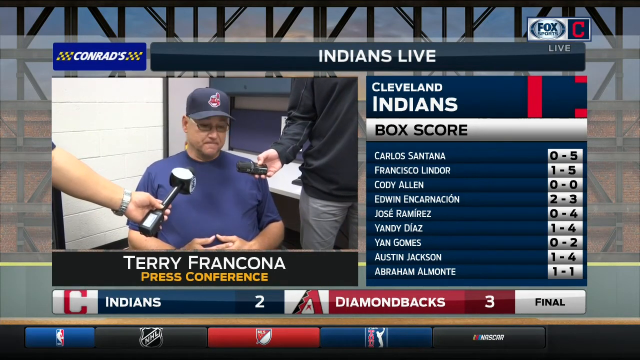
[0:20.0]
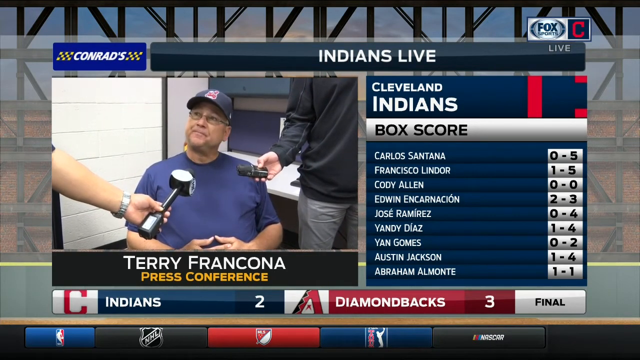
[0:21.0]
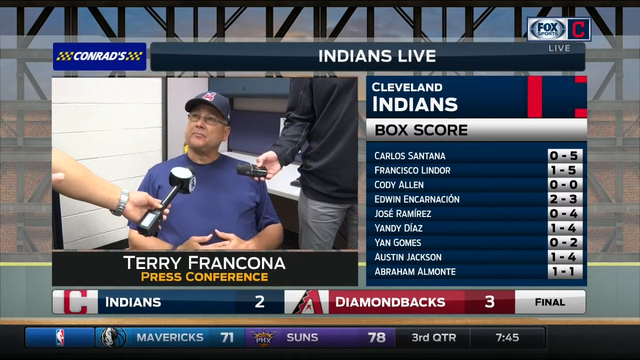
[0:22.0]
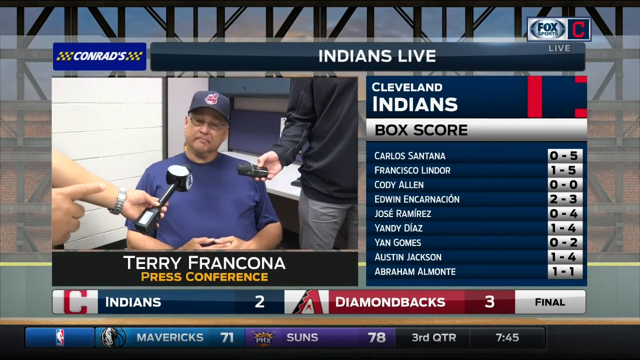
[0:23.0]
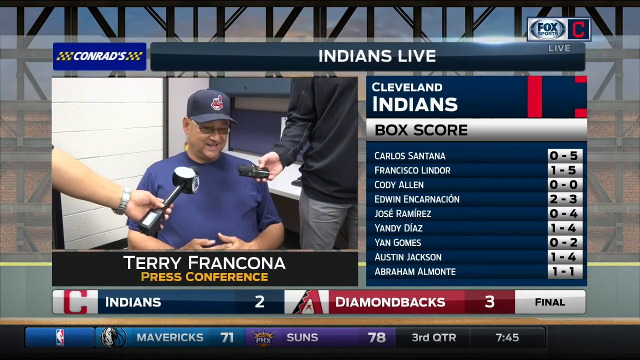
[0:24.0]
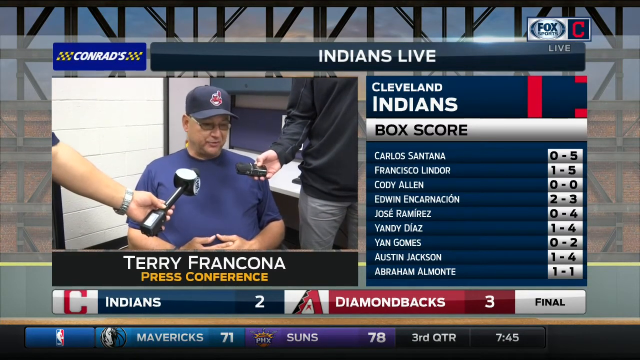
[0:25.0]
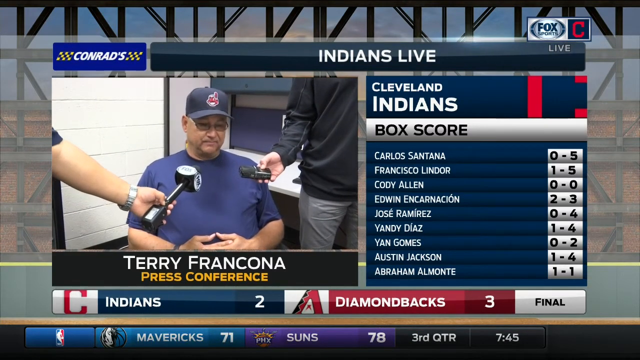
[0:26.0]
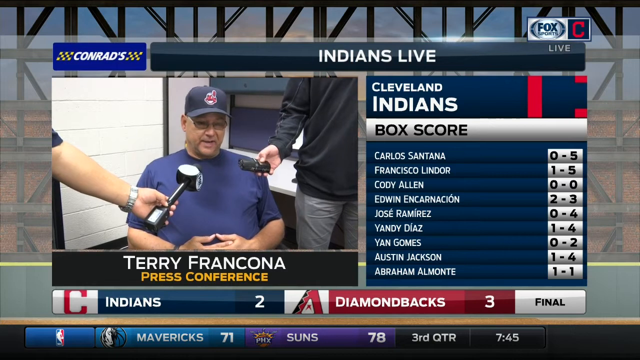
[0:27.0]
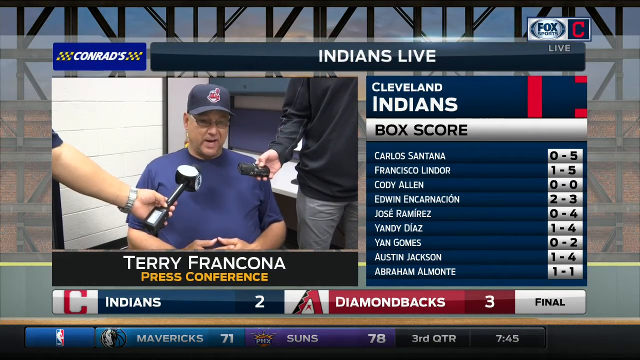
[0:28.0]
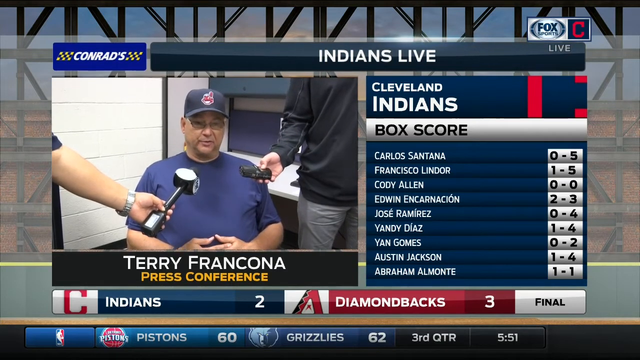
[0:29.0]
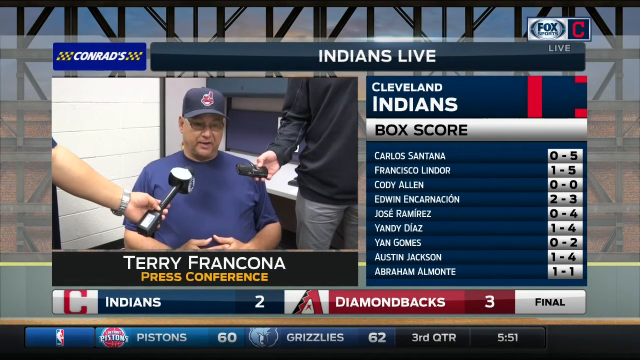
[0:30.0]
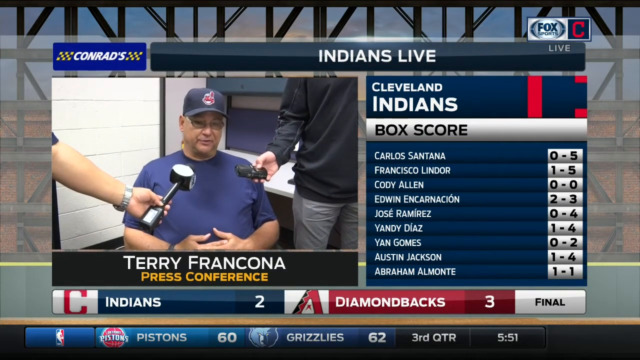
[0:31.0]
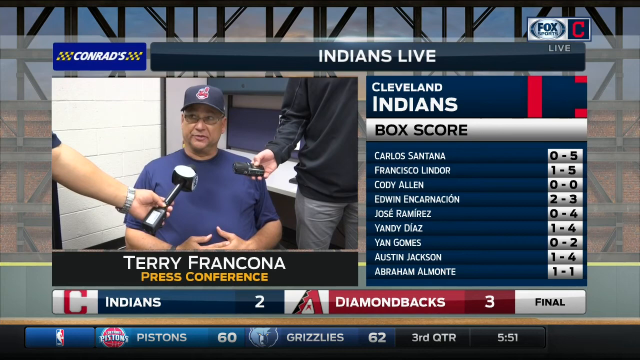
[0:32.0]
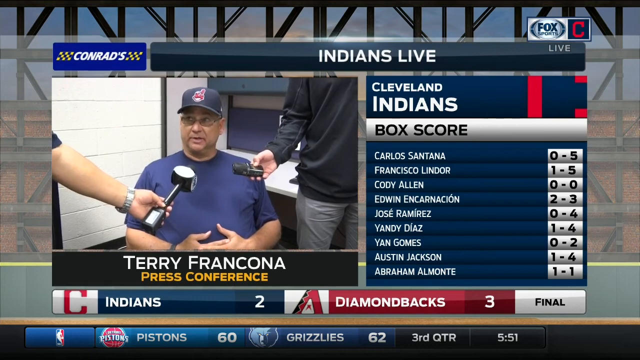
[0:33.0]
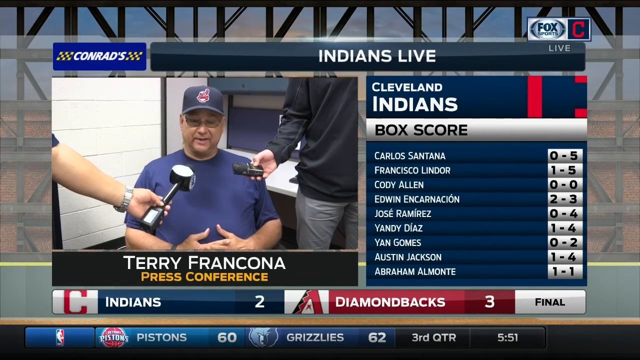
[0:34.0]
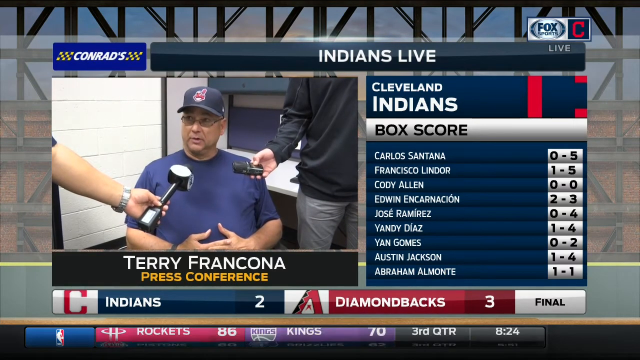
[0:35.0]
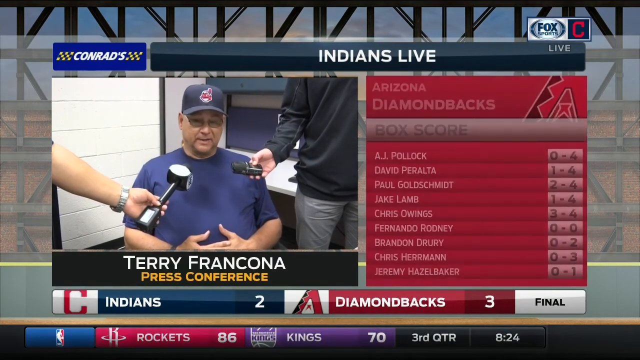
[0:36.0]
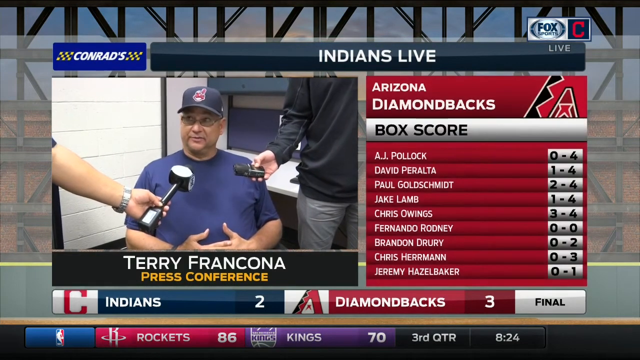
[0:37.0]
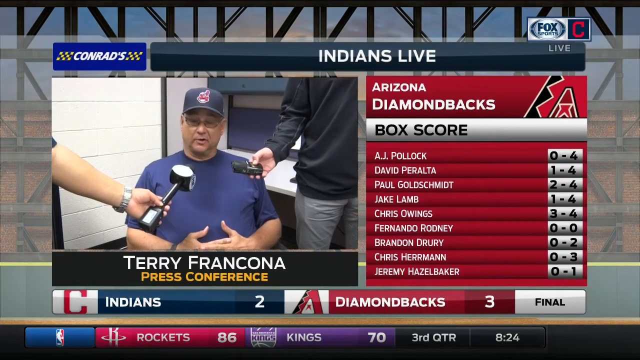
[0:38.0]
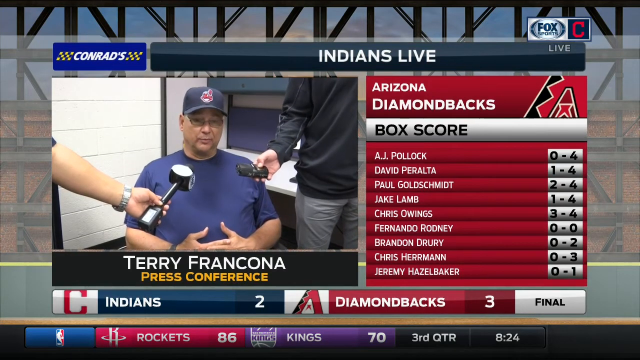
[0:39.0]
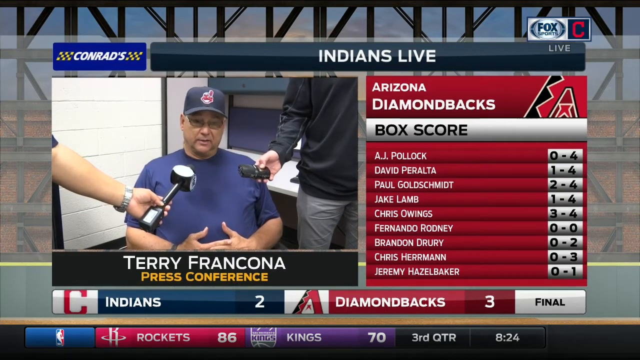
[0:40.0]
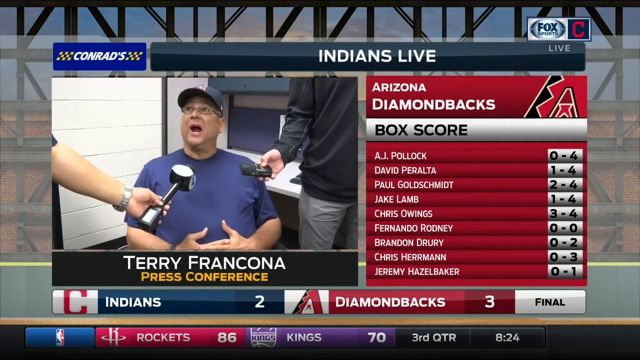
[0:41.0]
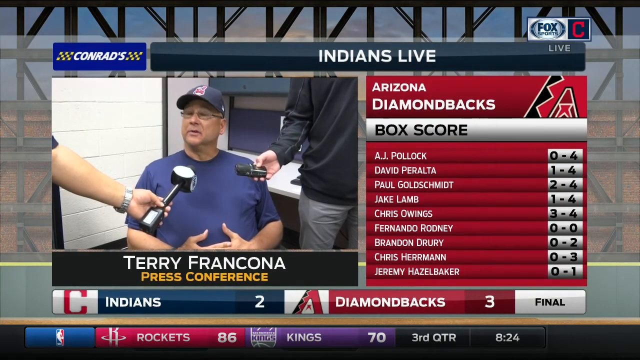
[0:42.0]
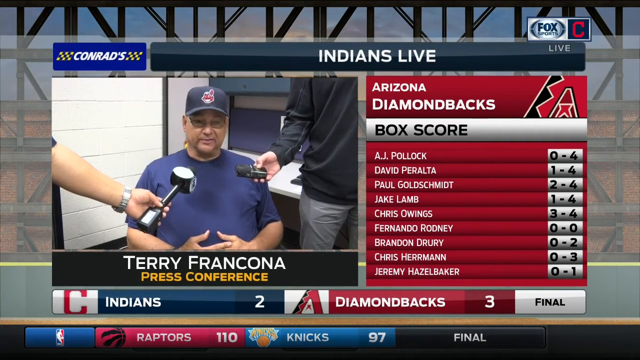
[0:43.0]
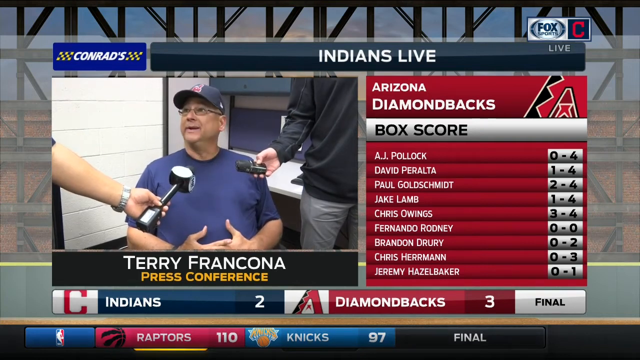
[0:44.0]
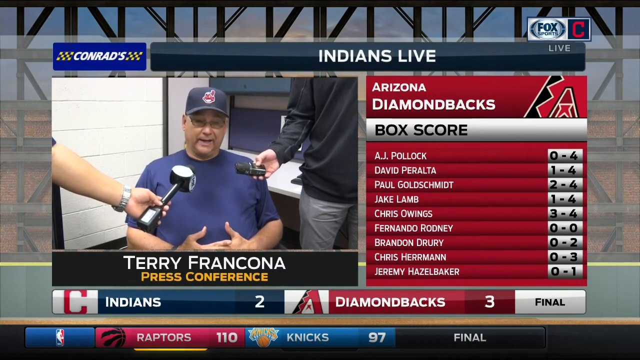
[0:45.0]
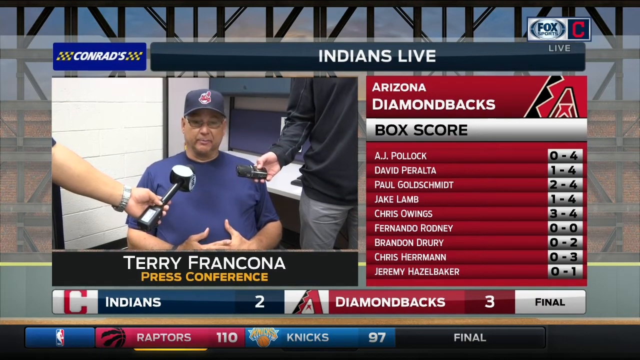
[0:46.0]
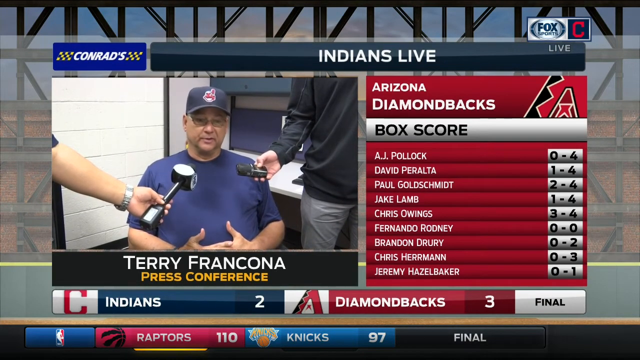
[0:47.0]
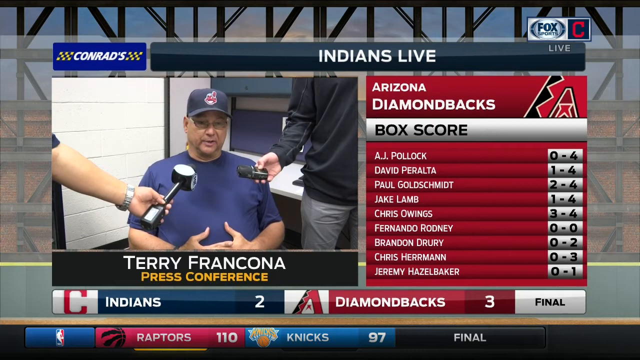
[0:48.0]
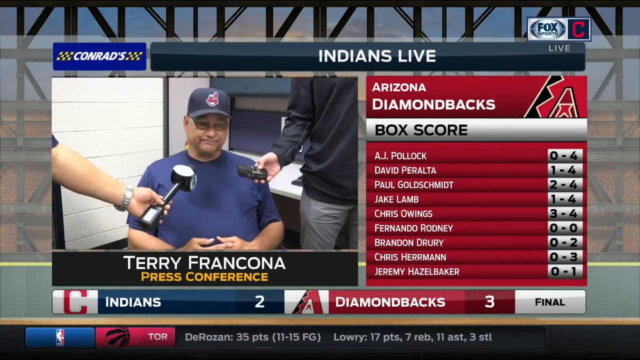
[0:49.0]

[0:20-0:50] Terry Francona, manager of the Cleveland Indians, talks about the game his team lost 3-2 to the Diamondbacks. The Indians' box score shows Francisco Lindor with a hit, Yandy Diaz with a hit, Edwin Acarcion with two hits, Austin Jackson with one hit, and Abraham Almonte with one hit. A reporter asks a question, pointing with his right hand and holding the microphone that looks like a five-pound weight in his left hand. Francona smiles, looks down, twiddles his thumbs a little, and answers, looking up at the man who asked the question. The Arizona Diamondbacks box score then appears: David Peralta with a hit, Paul Goldschmidt with two hits, Jake Lamb with a hit, and Chris Owings three for four. Francona keeps talking to the reporter who asked the question.